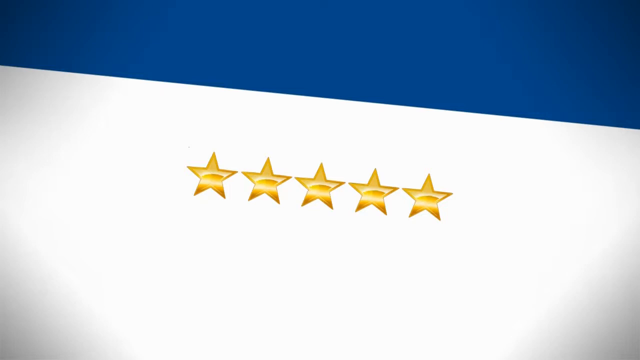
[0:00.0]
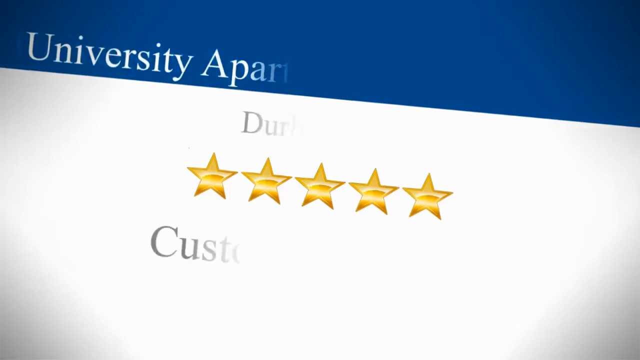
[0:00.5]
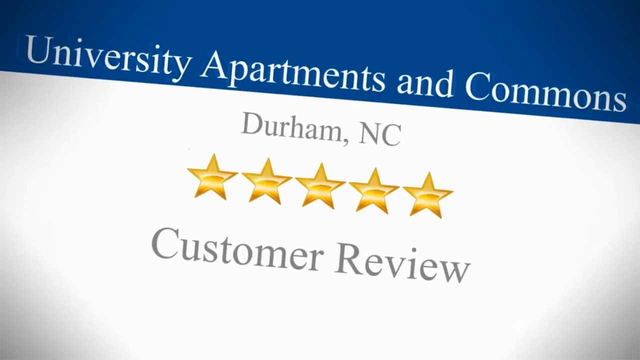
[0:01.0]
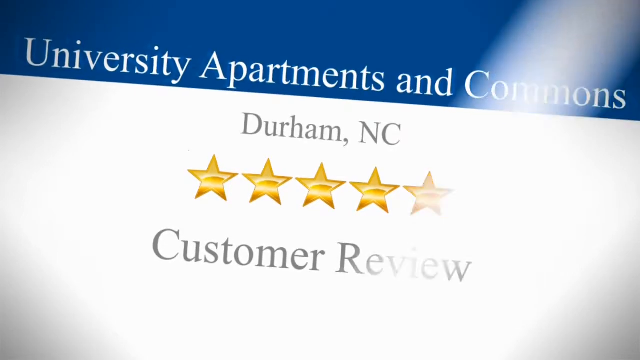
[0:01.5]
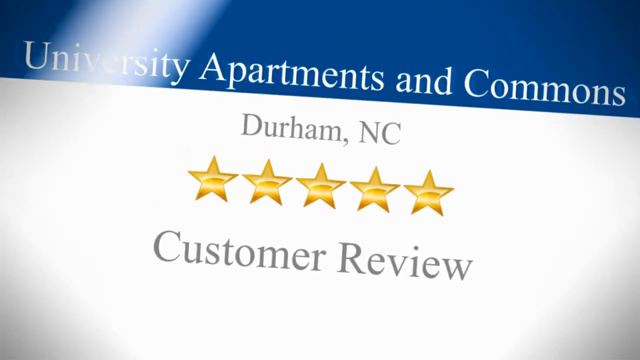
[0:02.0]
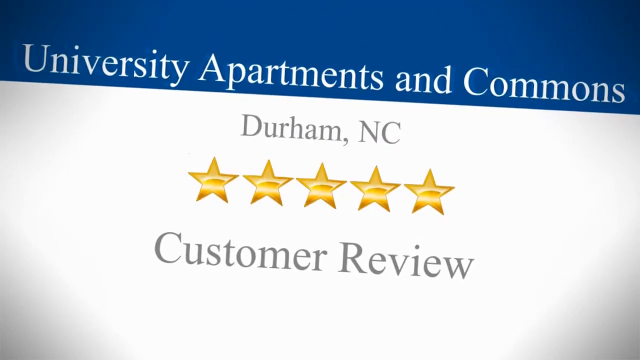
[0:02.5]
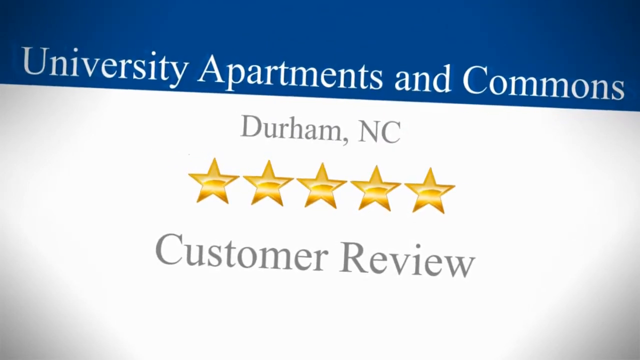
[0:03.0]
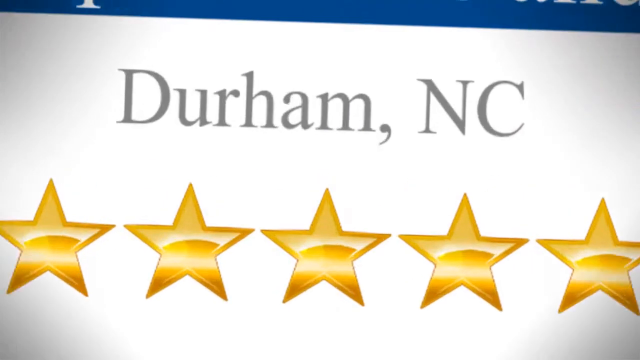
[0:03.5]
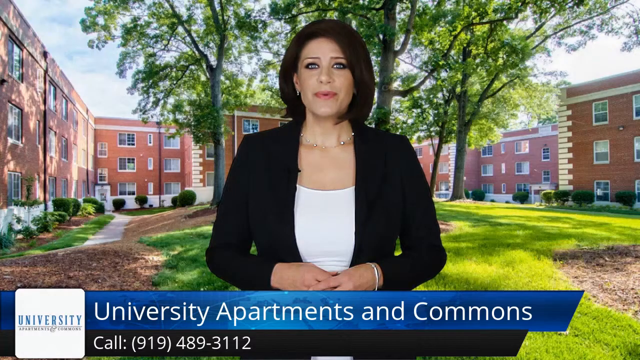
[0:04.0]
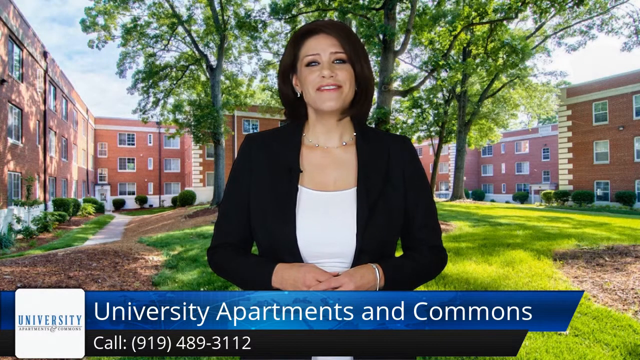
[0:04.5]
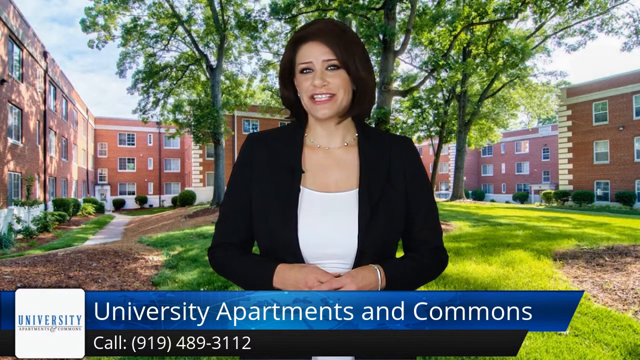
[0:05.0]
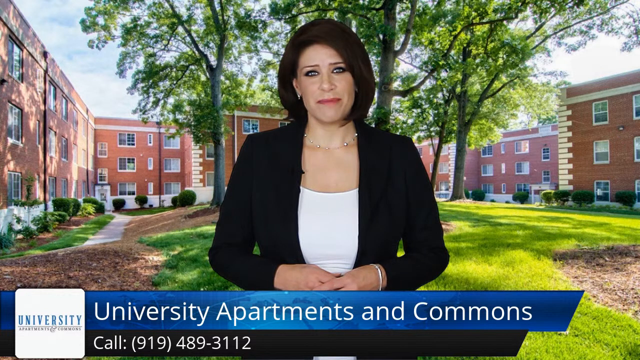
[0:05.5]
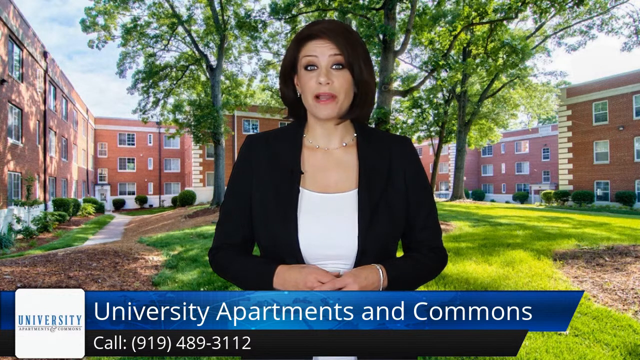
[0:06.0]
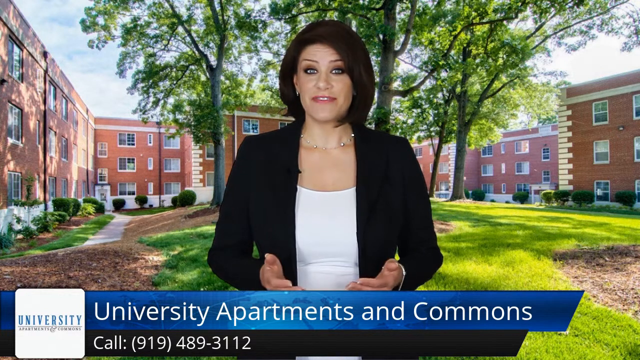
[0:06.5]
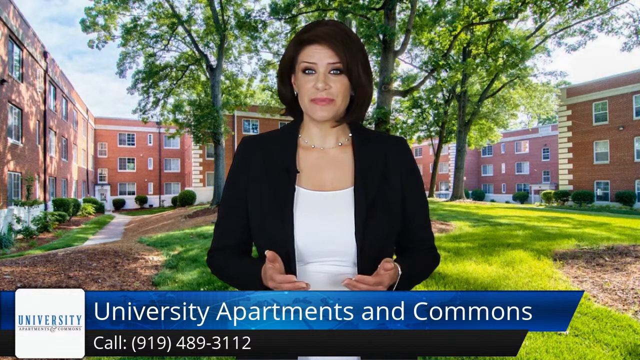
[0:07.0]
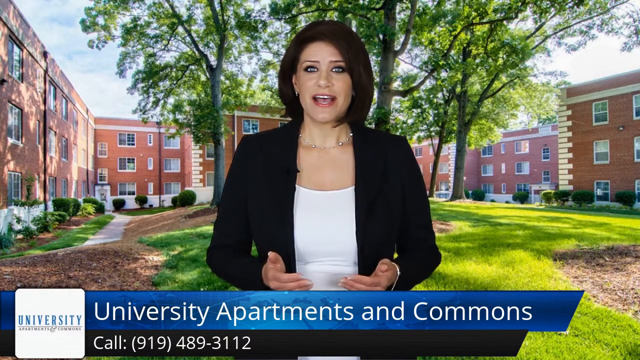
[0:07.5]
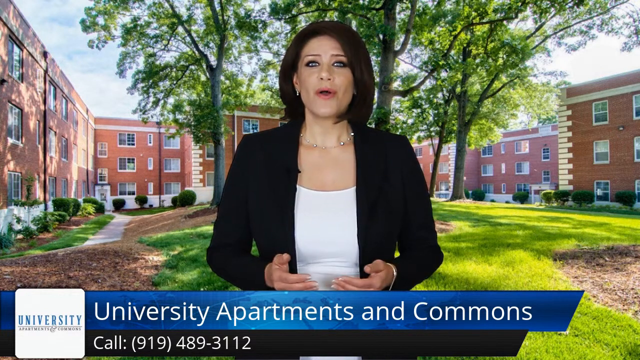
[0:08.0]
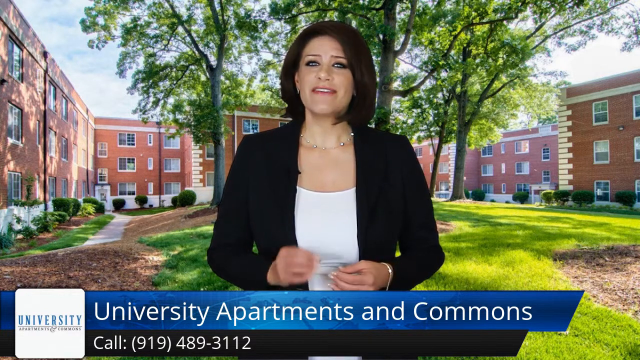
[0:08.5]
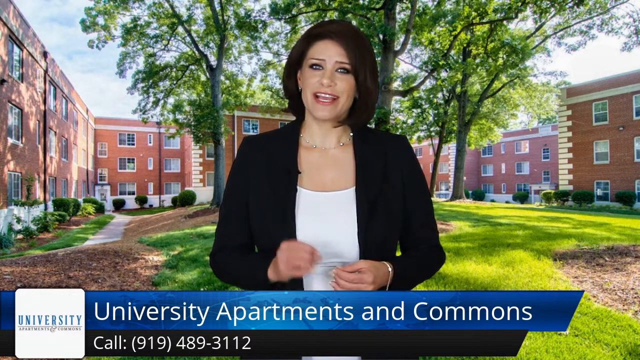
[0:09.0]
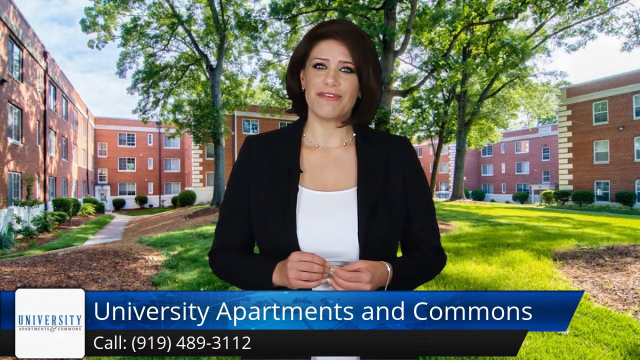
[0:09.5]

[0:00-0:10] Five golden stars appear above a white background with the words "University, Apartments and Commons." A young lady with short hair then begins speaking, with a number displayed at the bottom of the screen. What she is talking about is unclear, though she seems calm.